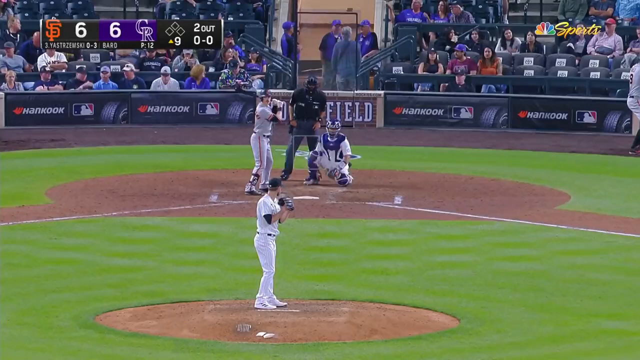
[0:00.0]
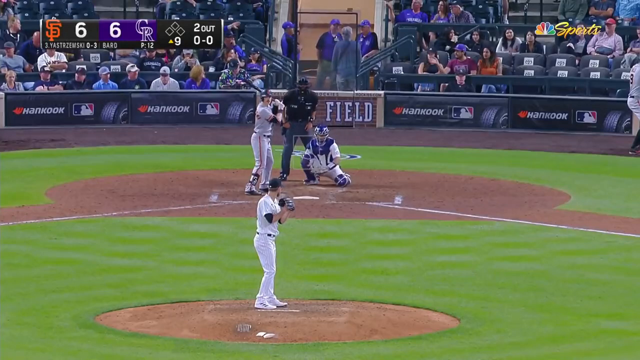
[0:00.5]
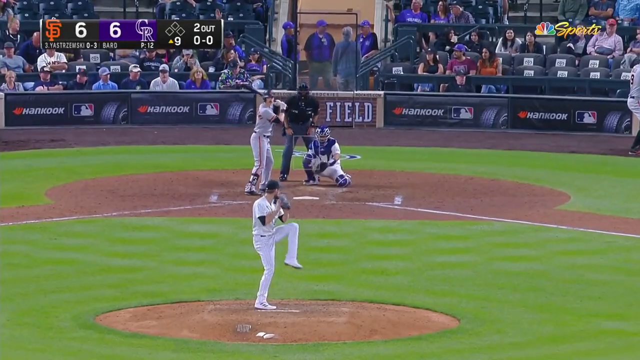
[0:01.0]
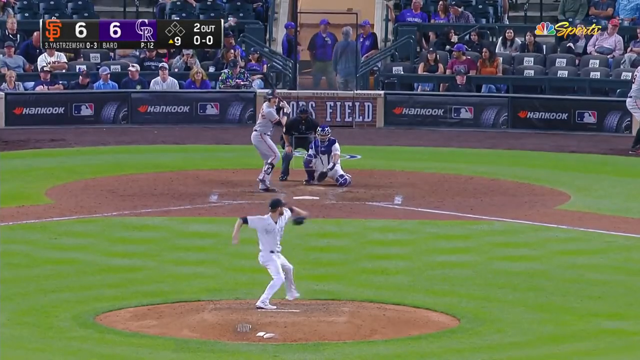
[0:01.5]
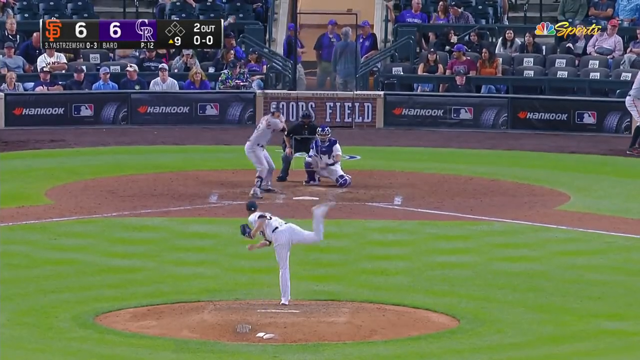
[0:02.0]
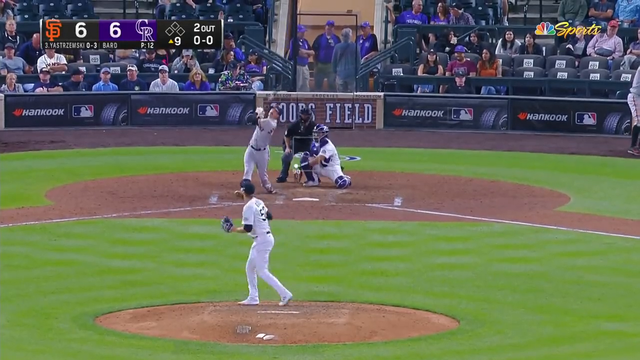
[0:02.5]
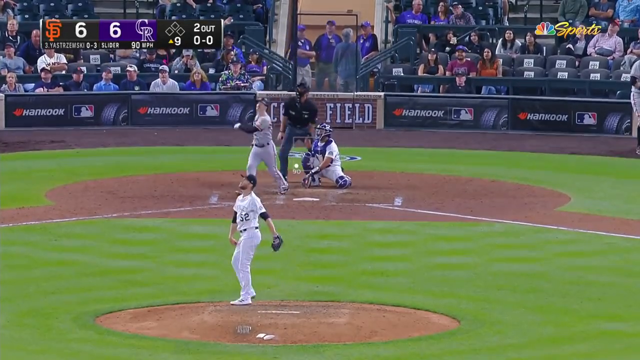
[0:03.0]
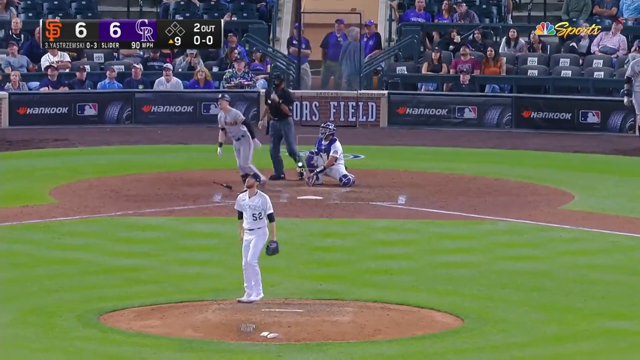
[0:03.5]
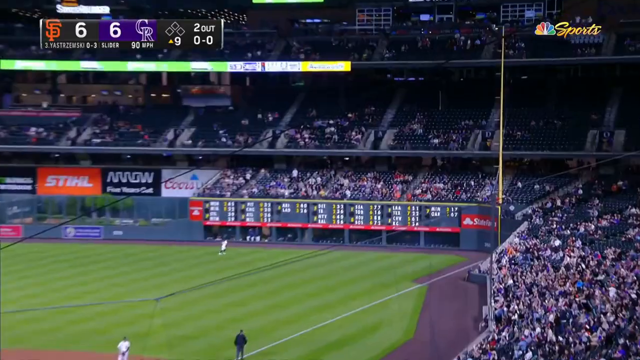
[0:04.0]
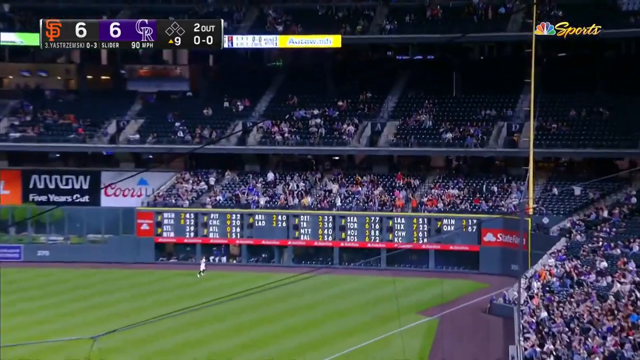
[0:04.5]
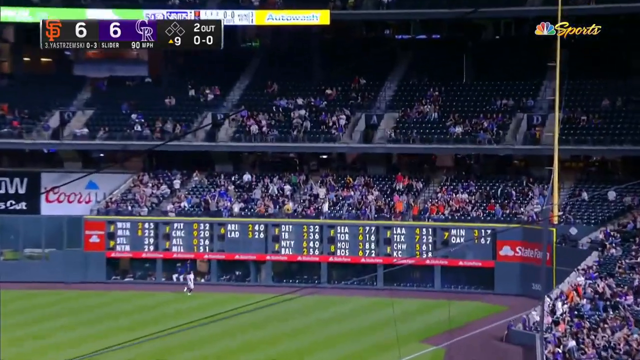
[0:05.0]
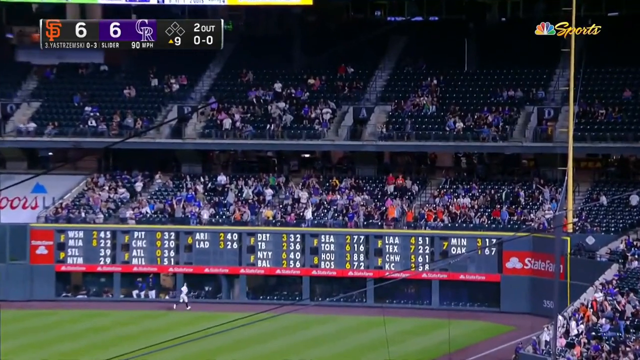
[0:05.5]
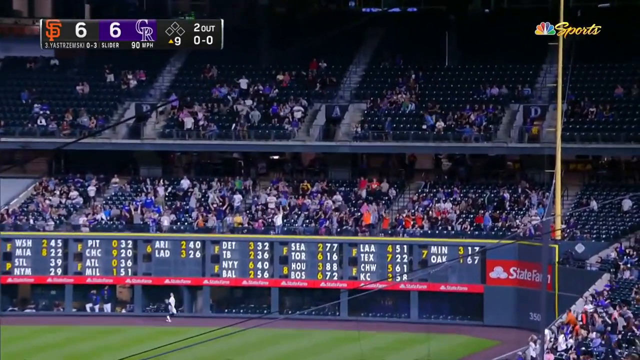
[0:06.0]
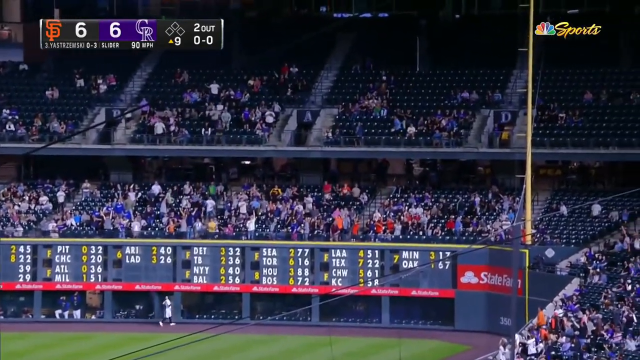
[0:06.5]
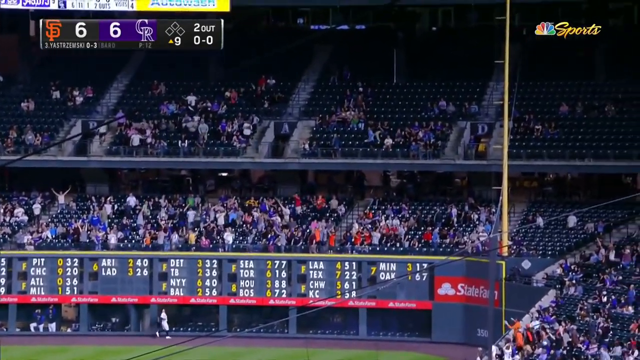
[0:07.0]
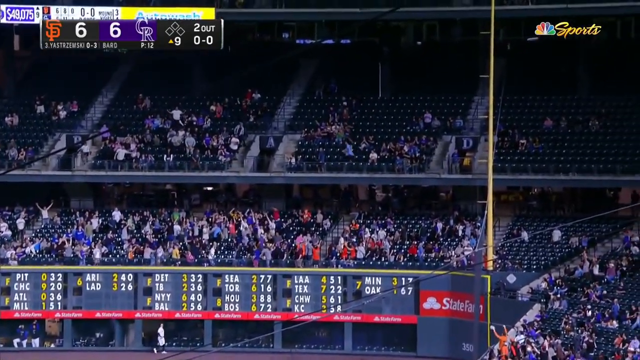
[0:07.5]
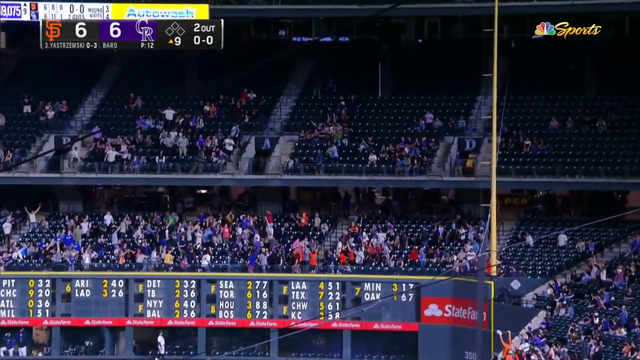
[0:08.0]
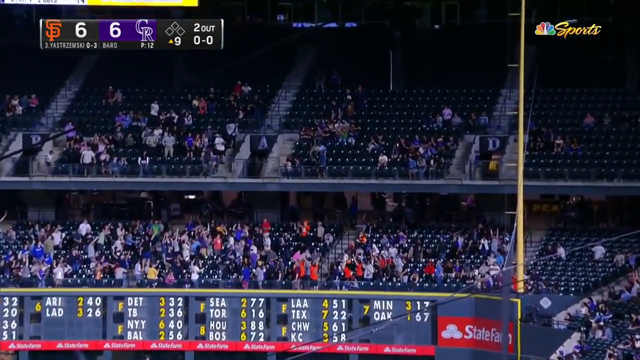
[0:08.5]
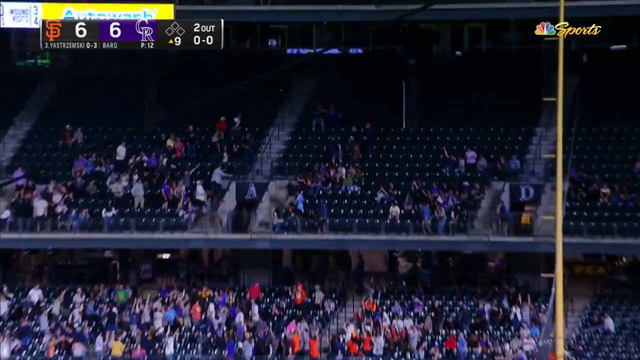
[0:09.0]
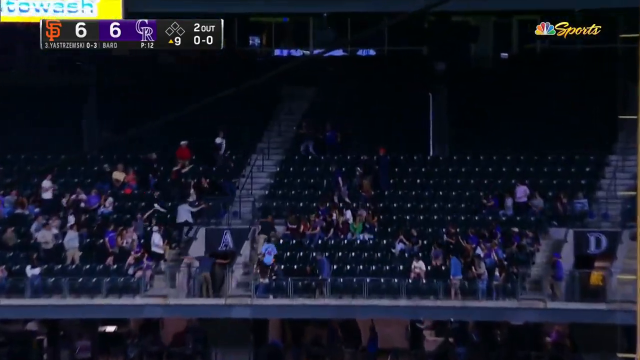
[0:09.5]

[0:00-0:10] What appears to be a Major League Baseball game opens with a player in a white uniform pitching to a player in a grey uniform. The batter gets a good hit; the ball sails off into the sky and clears the wall for a home run. The on-screen score graphic shows what seems to be the ninth inning, two outs, and a score of 6-6. The scoreboard shows symbols for the two teams: the first is apparently San Francisco, and the second is unrecognised, possibly either CR or GR.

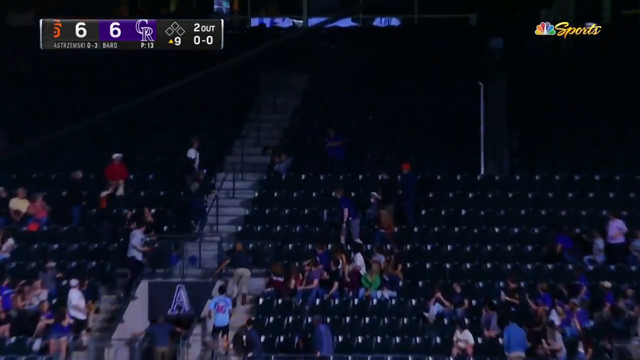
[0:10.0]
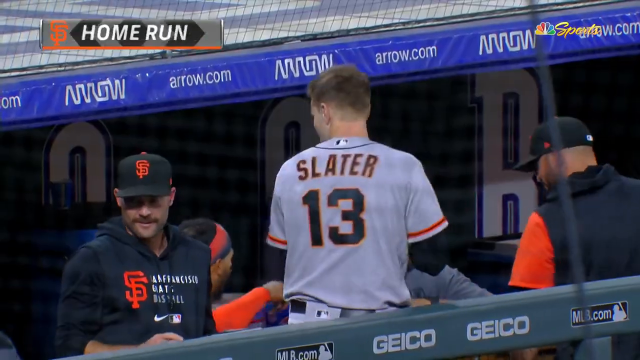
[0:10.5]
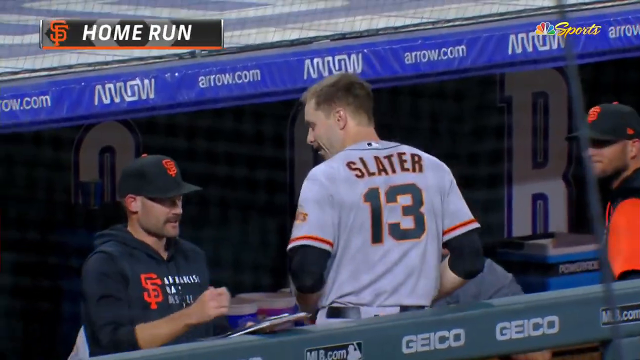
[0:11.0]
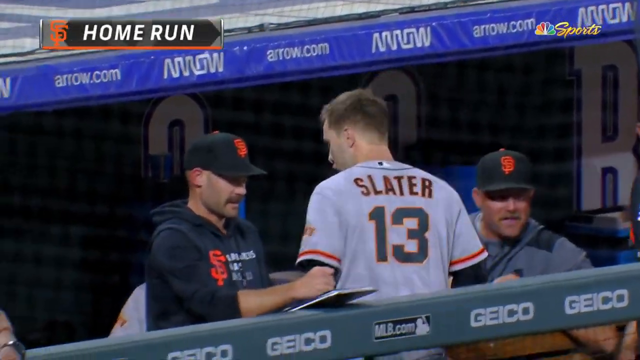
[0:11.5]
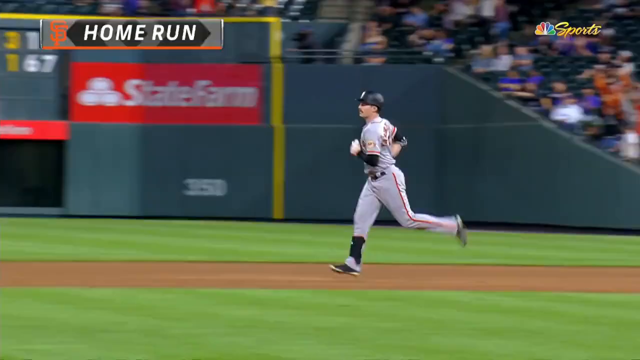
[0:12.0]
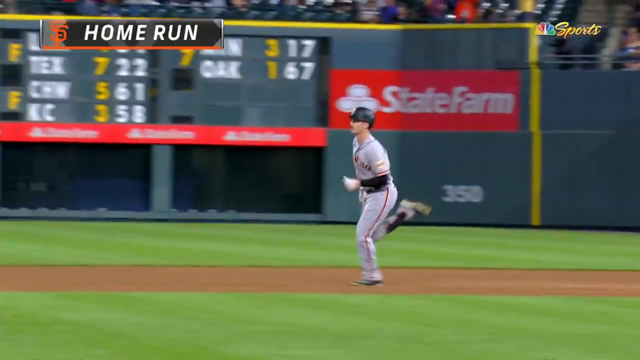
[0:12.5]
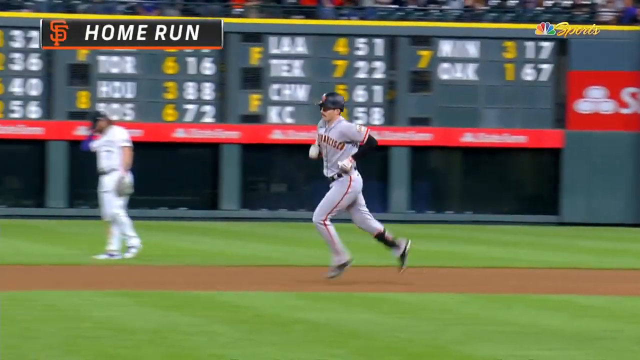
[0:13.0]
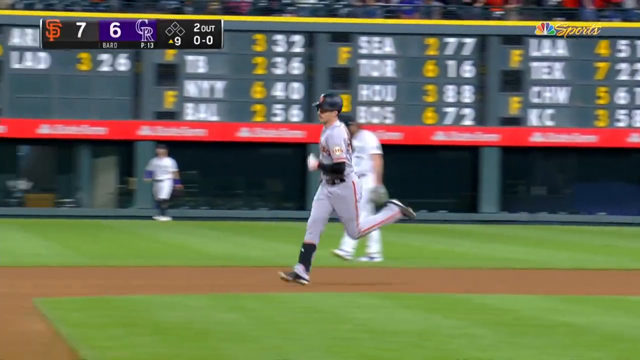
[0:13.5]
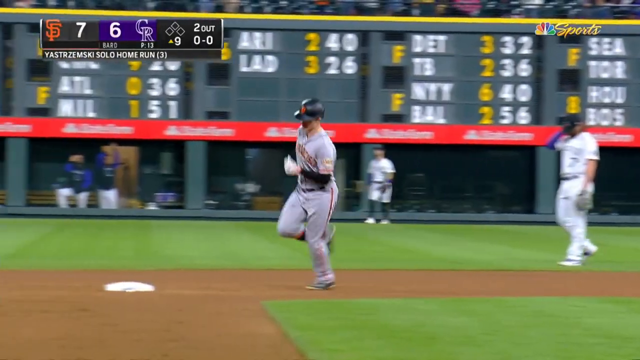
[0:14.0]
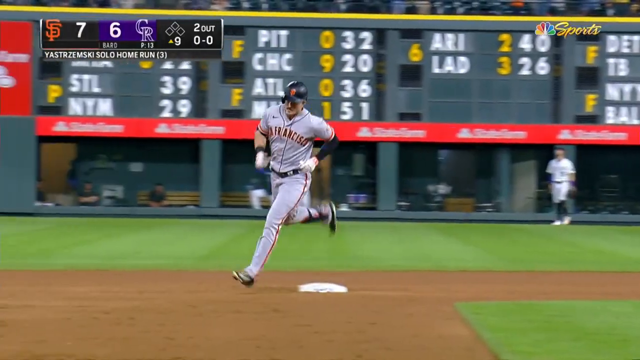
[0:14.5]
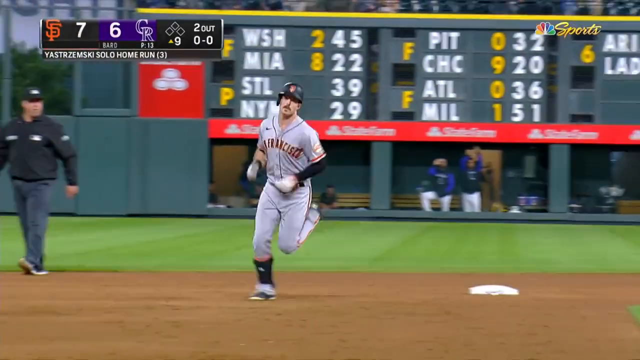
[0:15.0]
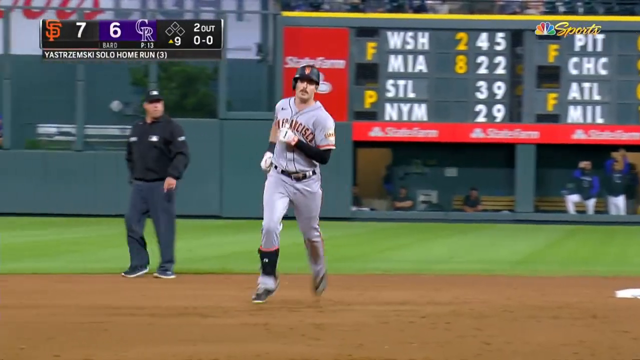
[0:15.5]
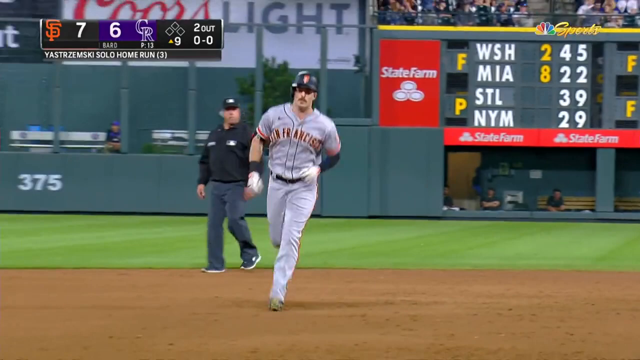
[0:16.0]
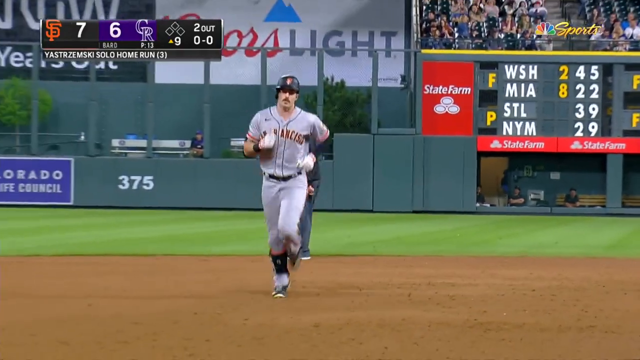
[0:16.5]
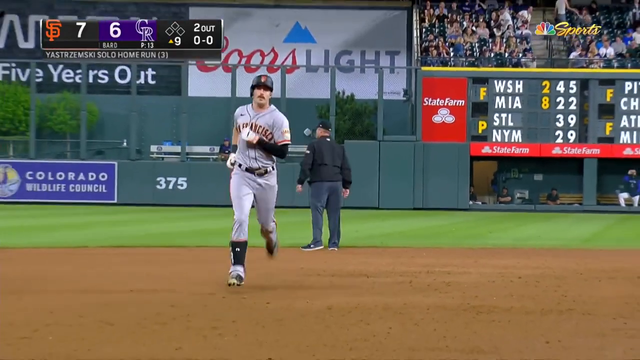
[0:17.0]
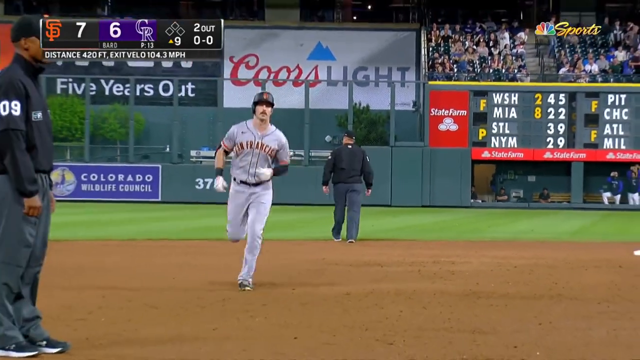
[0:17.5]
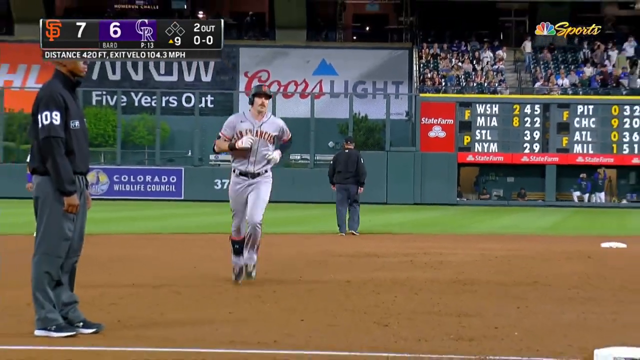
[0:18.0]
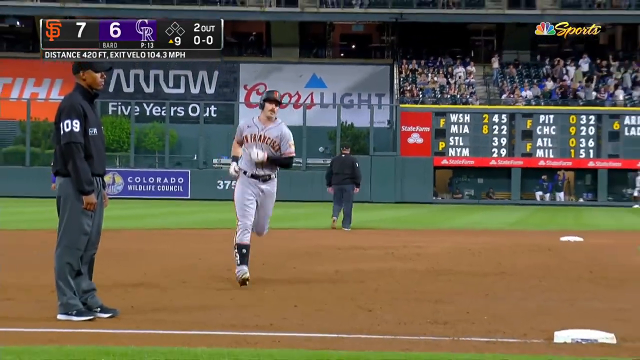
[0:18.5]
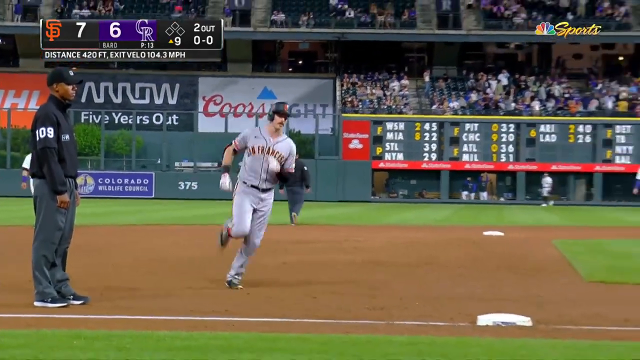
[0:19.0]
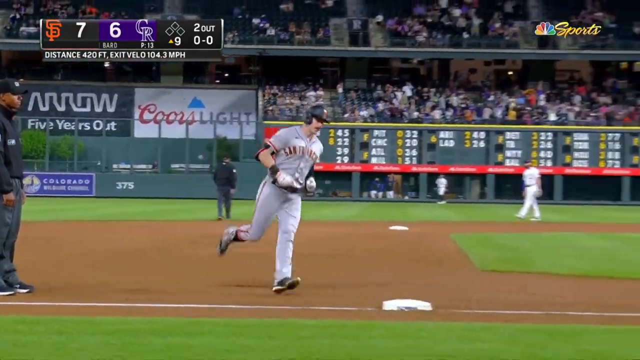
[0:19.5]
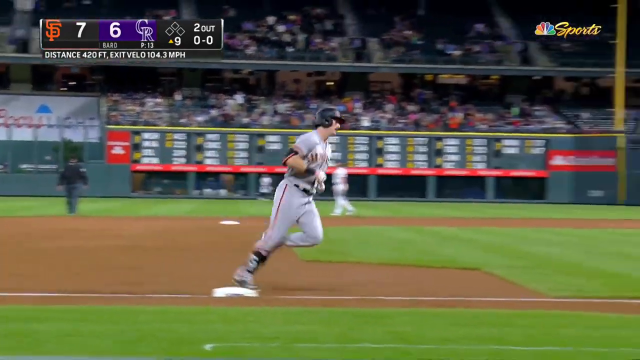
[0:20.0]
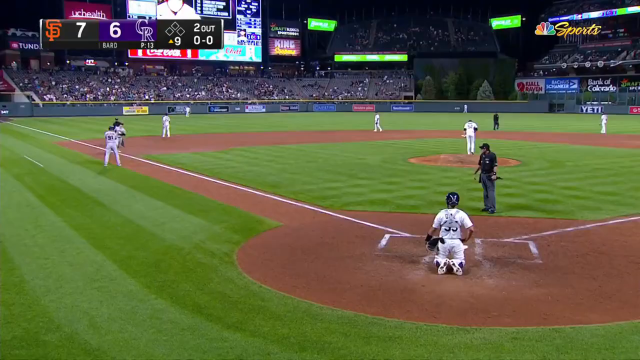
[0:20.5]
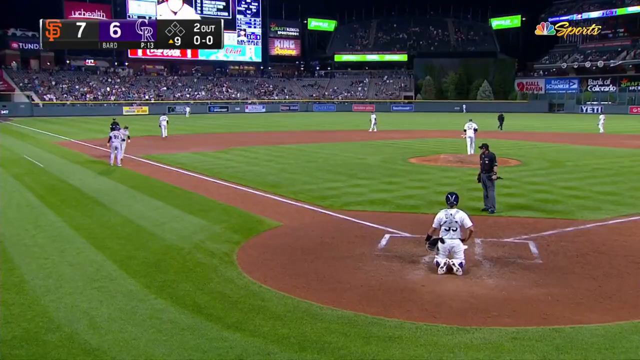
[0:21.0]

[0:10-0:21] After the home run, the player jogs around the bases, looking quite happy. He wears a grey kit and is from San Francisco. One of his teammates, named Slater according to the name on the back of his shirt, celebrates the home run, and quite a few other players celebrate as well; many of them have moustaches and wear baseball caps. The fans celebrate, while the players of the opposing team in white shirts look rather dejected. The game appears fairly thinly attended, with a lot of empty seats in the stadium. An NBC Sports logo is visible, a scoreboard shows other Major League Baseball games, and there are adverts for State Farm and Coors Light.